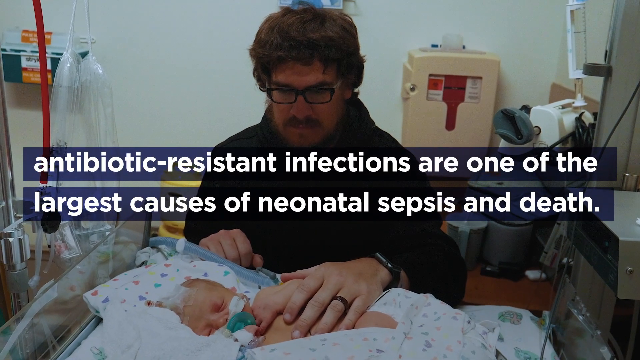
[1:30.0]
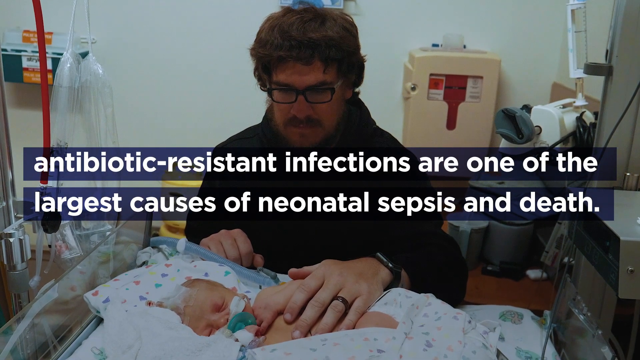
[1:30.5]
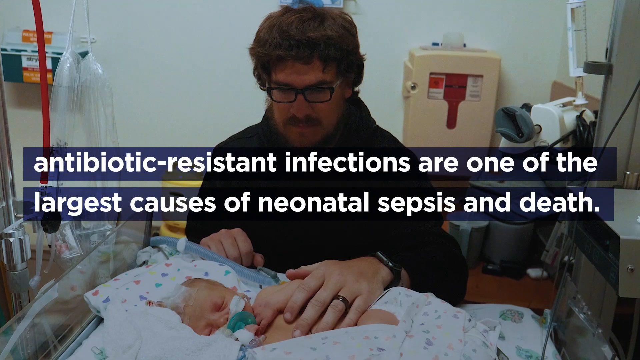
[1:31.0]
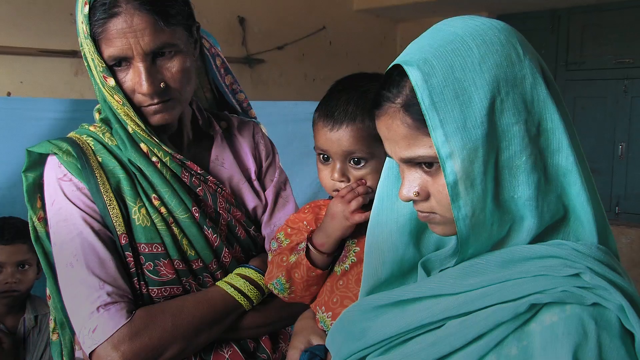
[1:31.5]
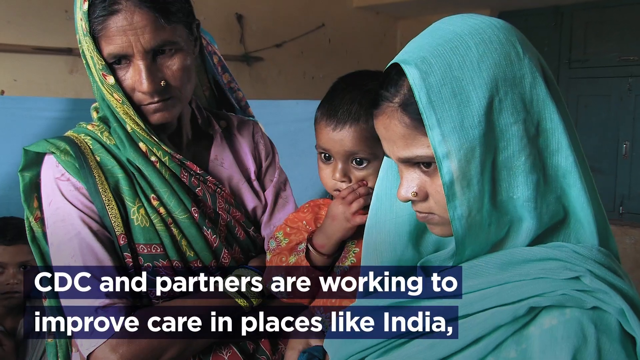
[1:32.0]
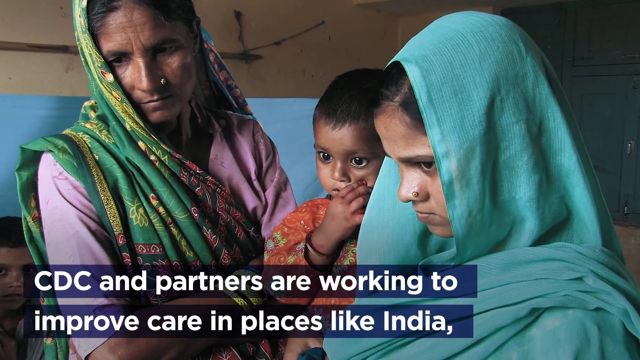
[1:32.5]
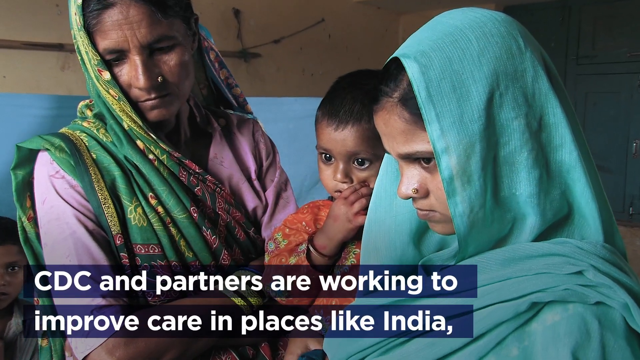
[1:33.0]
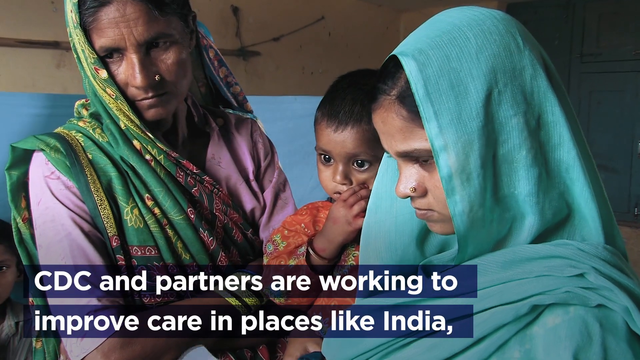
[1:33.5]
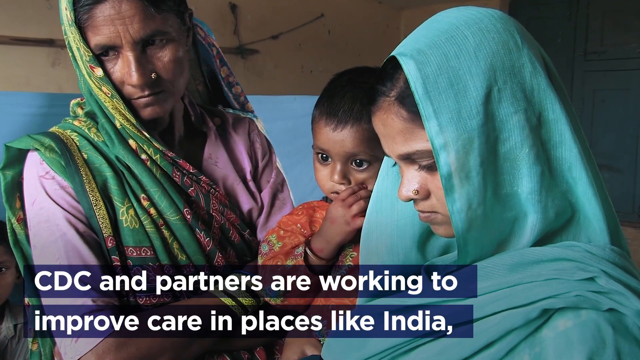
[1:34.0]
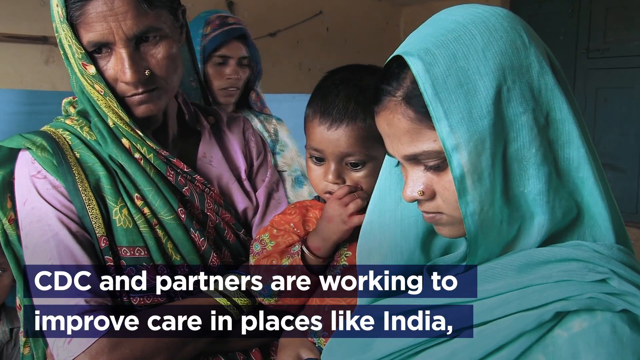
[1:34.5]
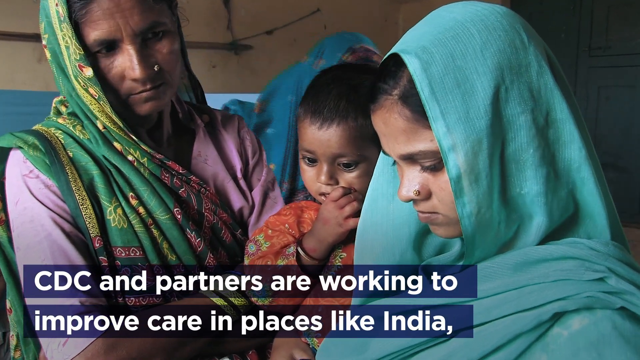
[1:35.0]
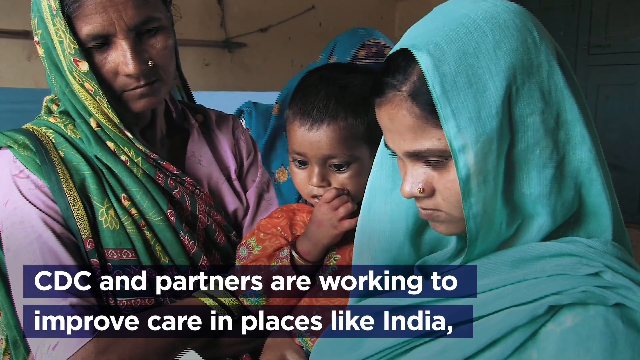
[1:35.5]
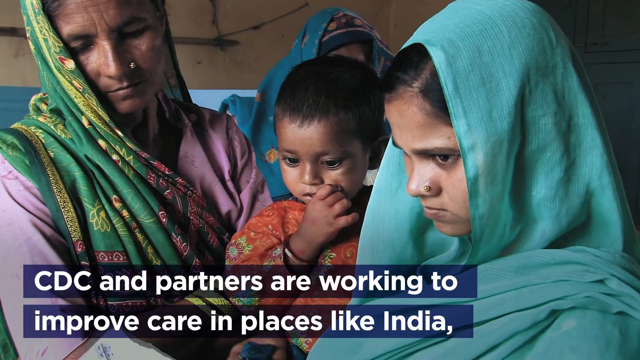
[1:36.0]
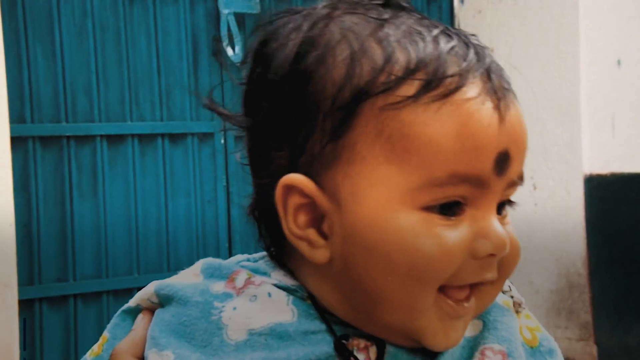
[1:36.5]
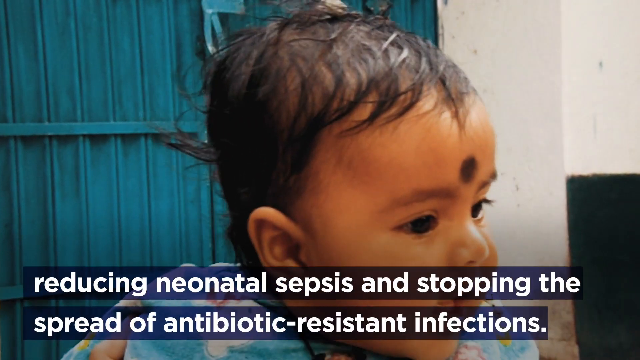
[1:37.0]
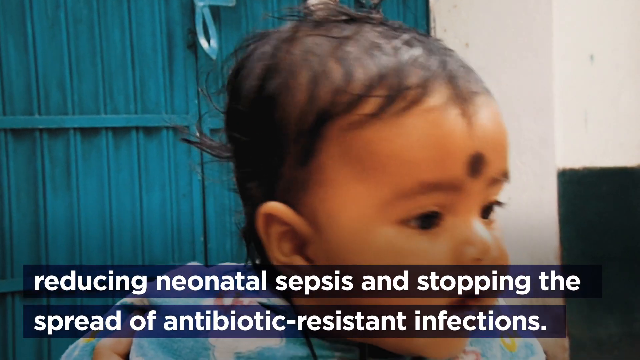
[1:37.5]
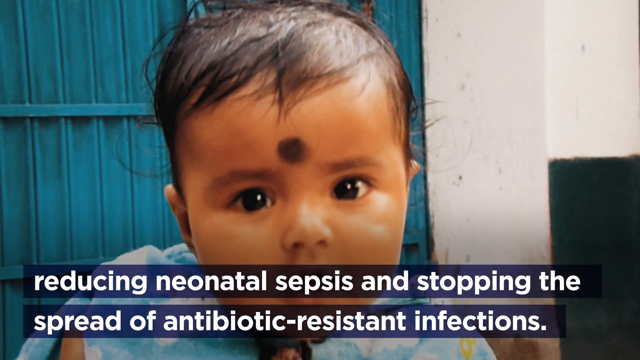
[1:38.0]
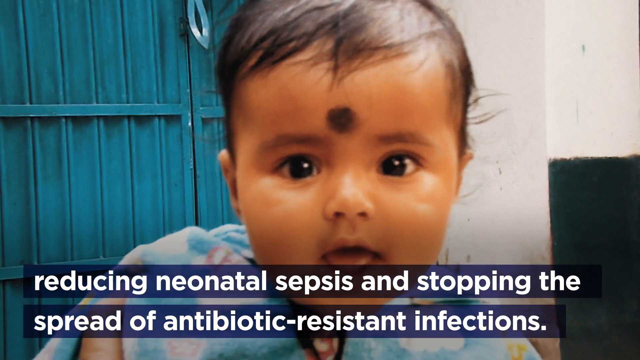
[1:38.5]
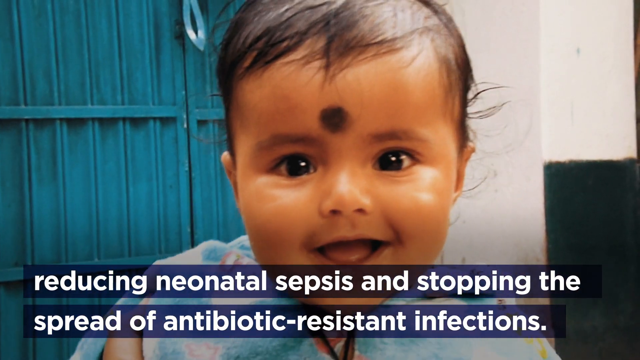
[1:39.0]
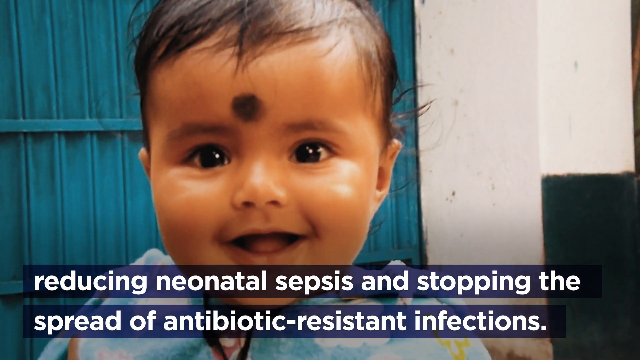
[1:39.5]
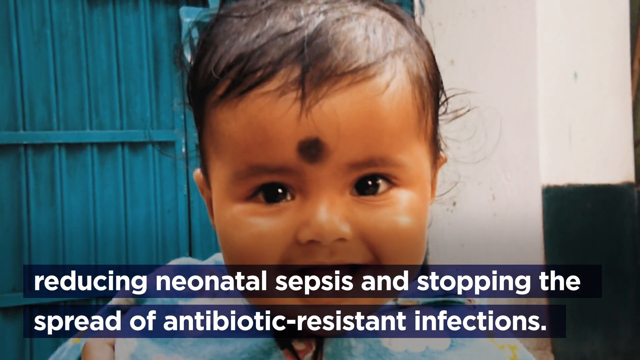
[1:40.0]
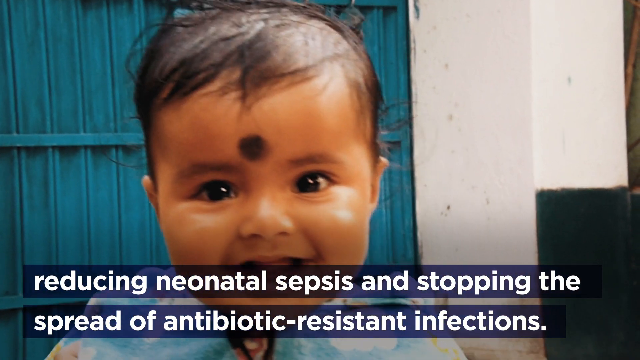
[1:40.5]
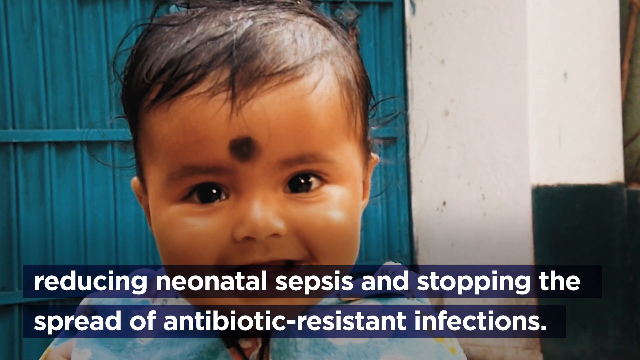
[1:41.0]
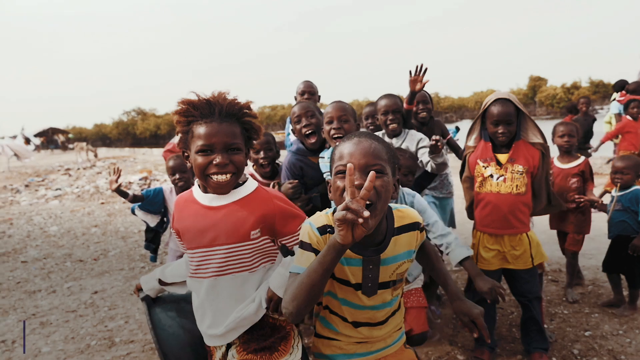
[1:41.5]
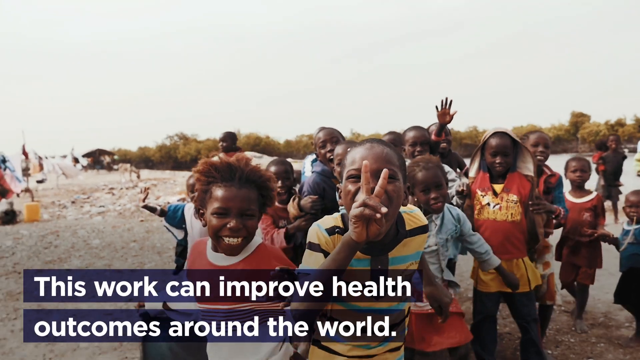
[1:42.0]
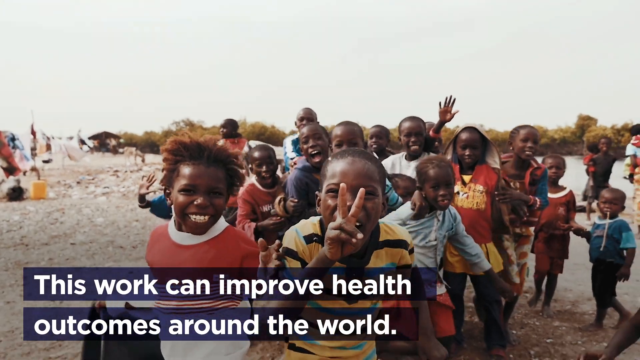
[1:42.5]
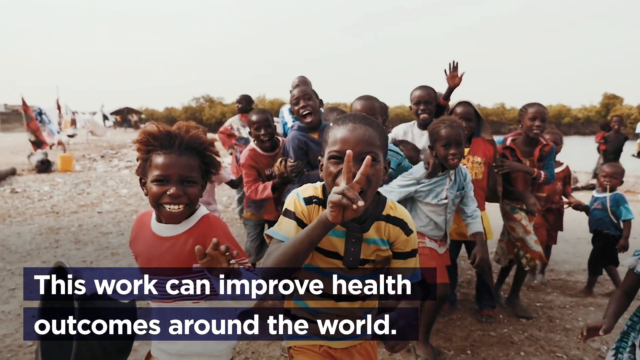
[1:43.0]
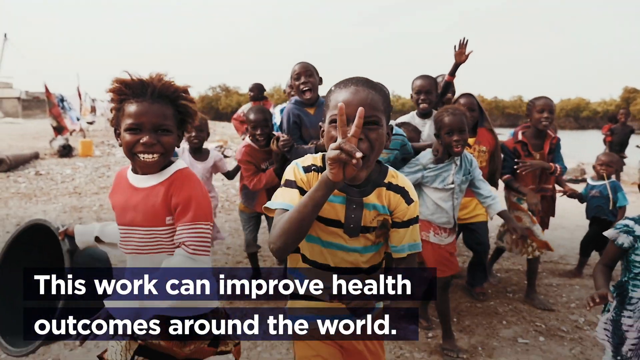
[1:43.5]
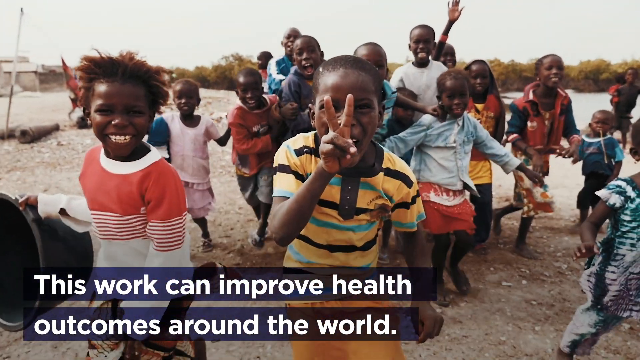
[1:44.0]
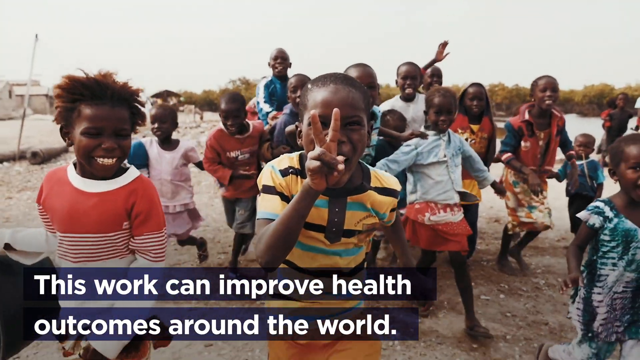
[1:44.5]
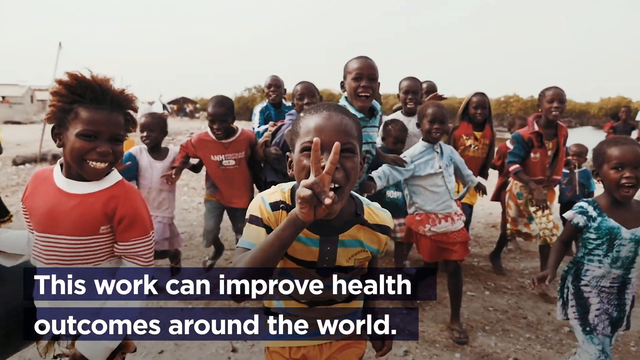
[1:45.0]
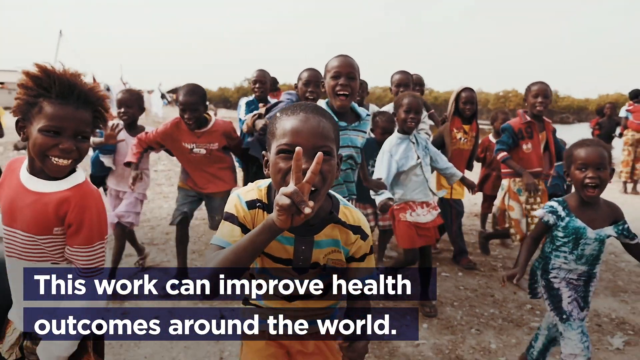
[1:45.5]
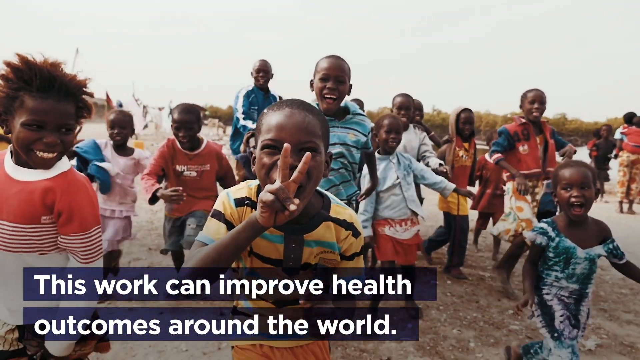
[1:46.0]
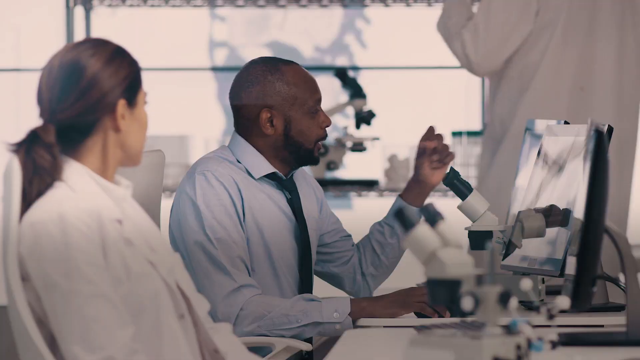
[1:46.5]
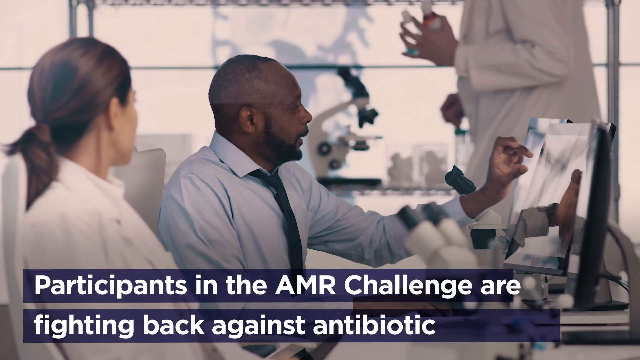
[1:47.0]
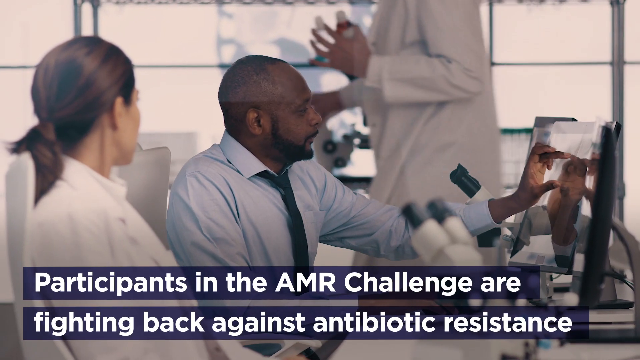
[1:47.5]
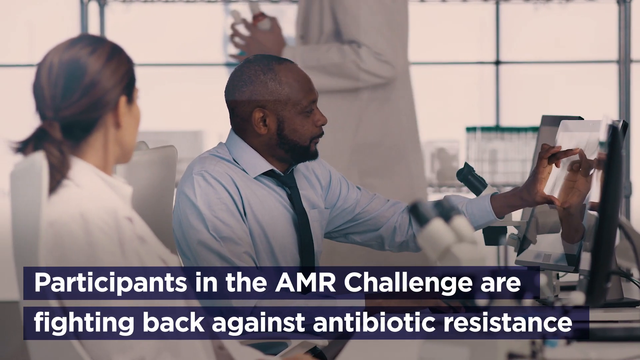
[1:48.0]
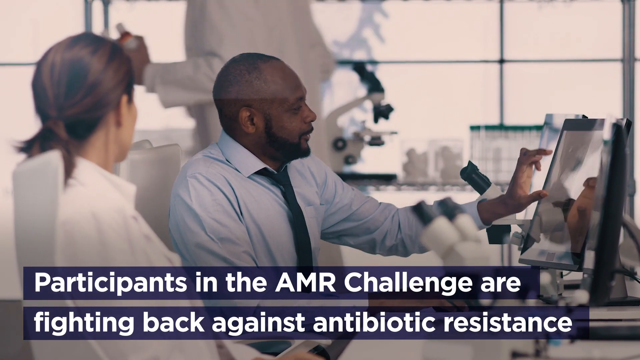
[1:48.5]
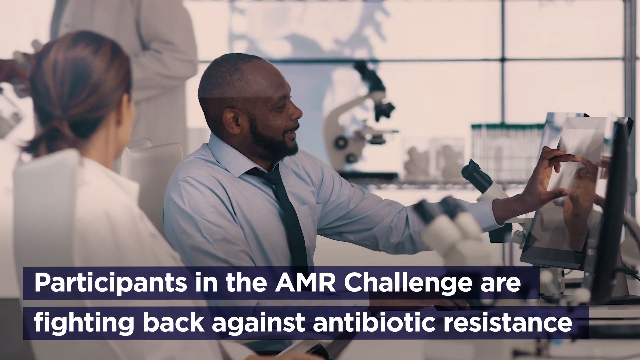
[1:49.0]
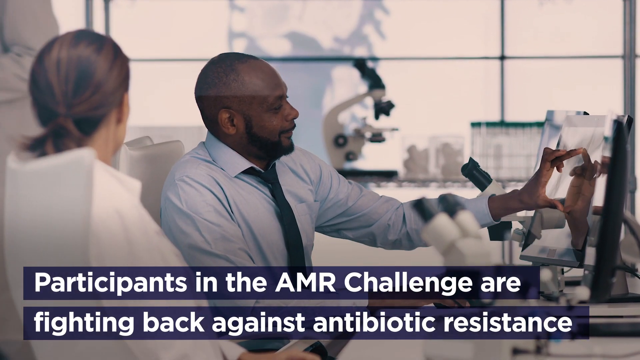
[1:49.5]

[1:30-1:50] People who seem to be from India appear: an older mother on the left wearing purple with a green sash with gold in it over her head, a baby in the middle with a thumb in her mouth, and an older girl on the right with a blue headdress over her head. White letters at the bottom of the screen read "CDC and partners are working to improve care in places like India." Next, a dark-skinned little baby from India has a small round thumbprint-like mark between her eyes, a little up on her forehead; a blue fence and a white wall of some sort are behind her, and she looks right into the camera. White letters at the bottom read "reducing neonatal sepsis and stopping the spread of antibiotic resistant infections." Then, in a place that looks like Africa, many dark-skinned little children wave at the camera, some showing peace signs and most smiling; several wear red, some blue and some striped clothing, and they run around in an area where they live. The scene then cuts directly to a black man in a blue shirt sitting by a microscope, with a light-skinned woman in a white shirt, her hair pulled back in a ponytail, to his left; they study a screen by the microscope, and text at the bottom reads "participating in the AMR challenges Fighting Back Against Antibiotic Resistance."